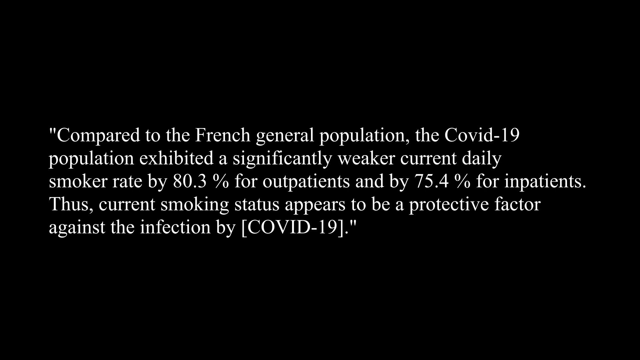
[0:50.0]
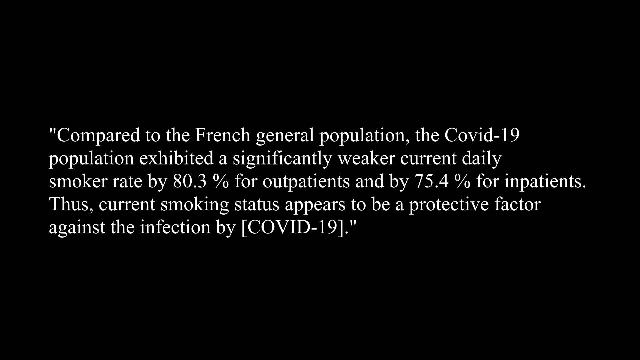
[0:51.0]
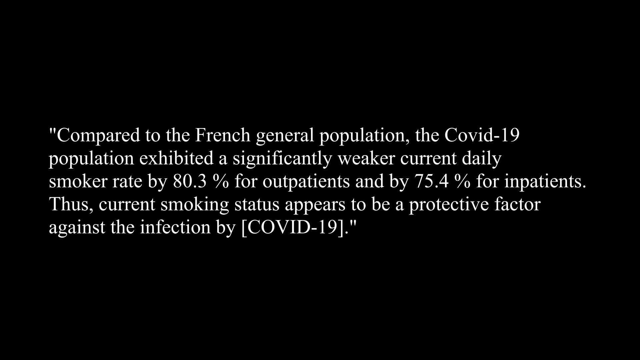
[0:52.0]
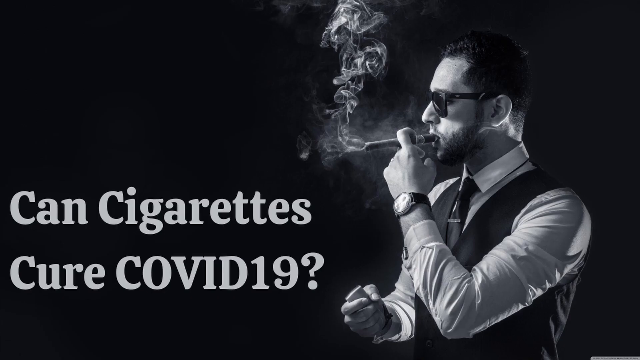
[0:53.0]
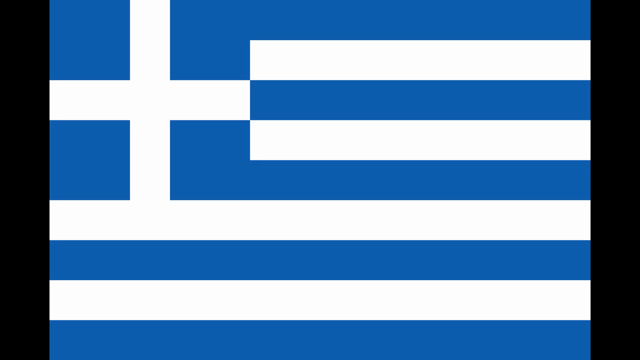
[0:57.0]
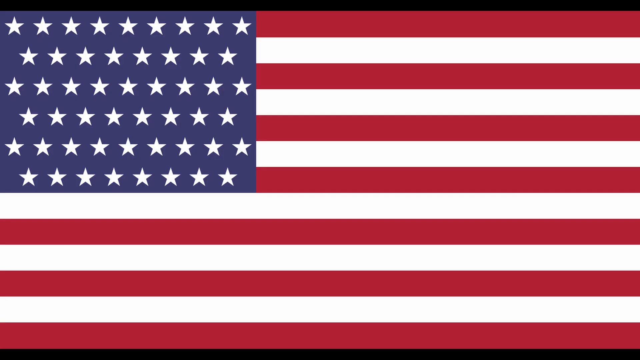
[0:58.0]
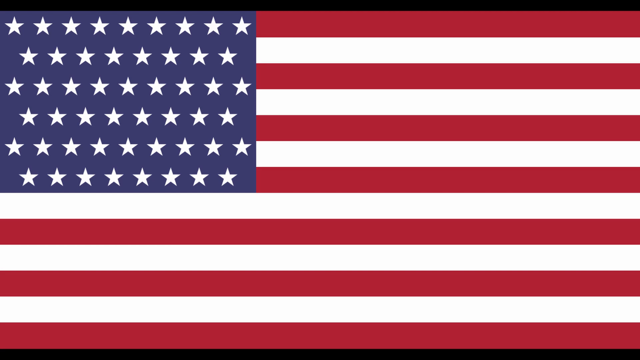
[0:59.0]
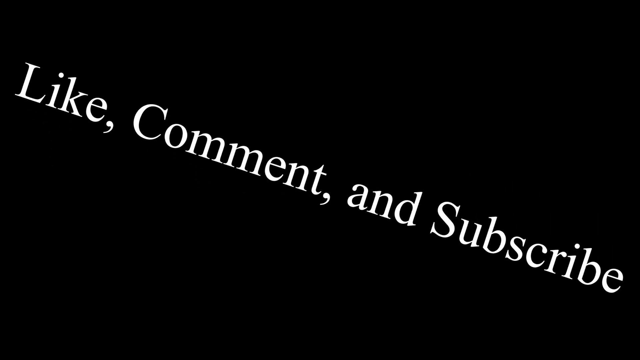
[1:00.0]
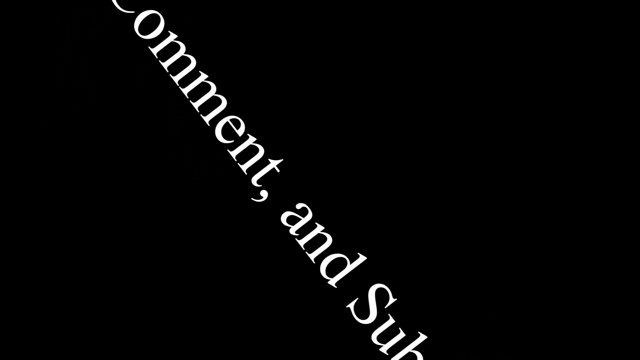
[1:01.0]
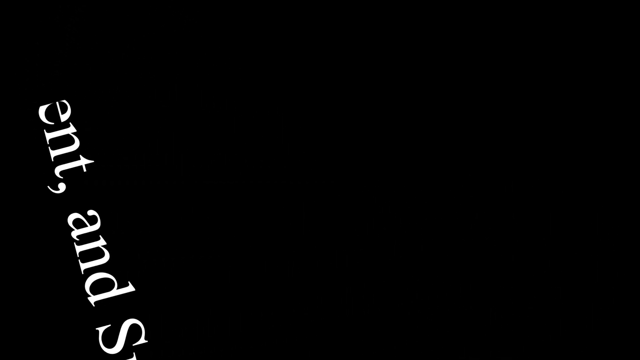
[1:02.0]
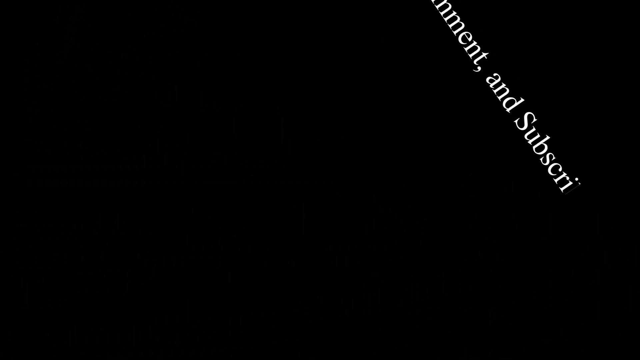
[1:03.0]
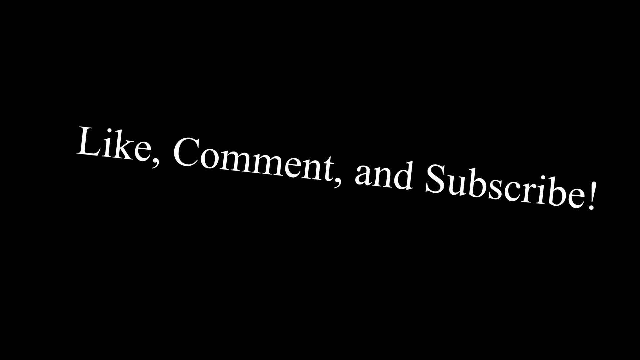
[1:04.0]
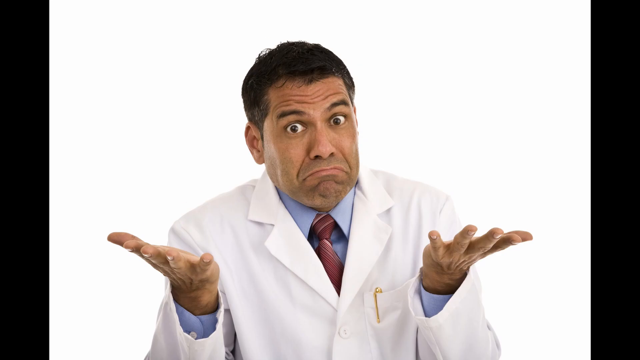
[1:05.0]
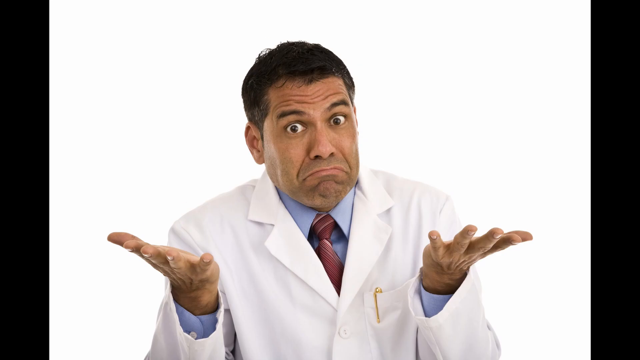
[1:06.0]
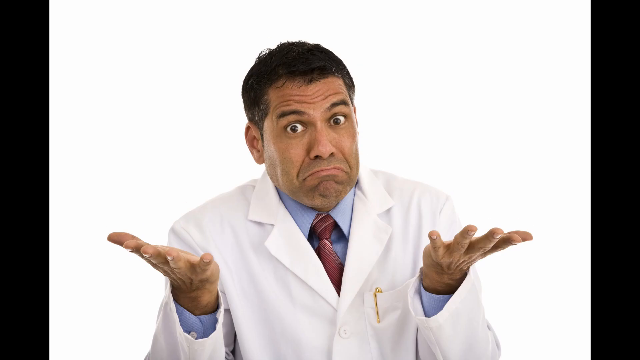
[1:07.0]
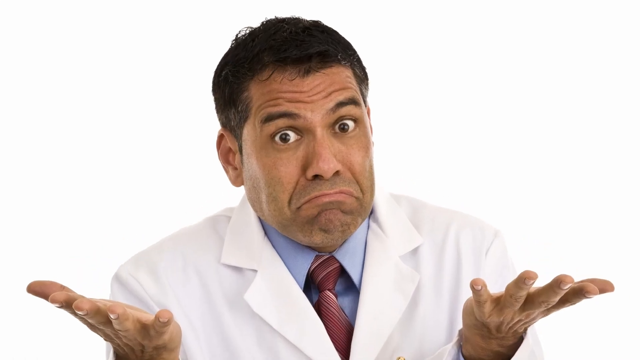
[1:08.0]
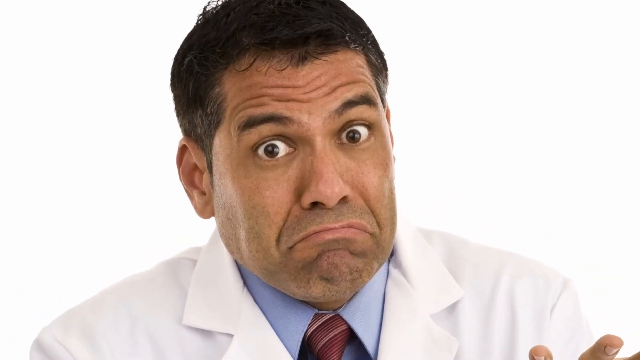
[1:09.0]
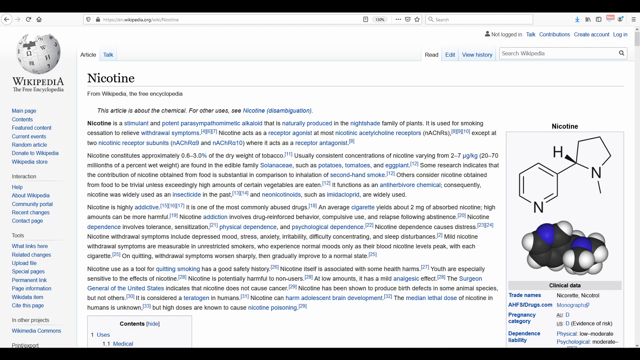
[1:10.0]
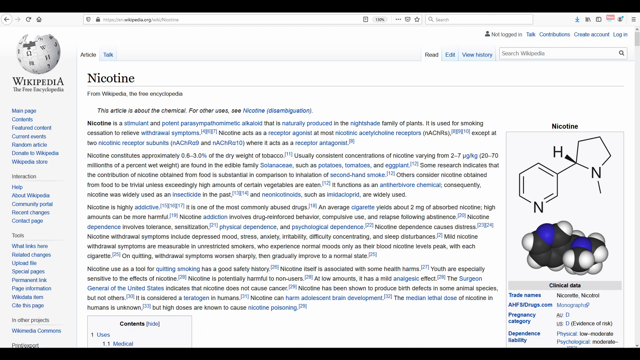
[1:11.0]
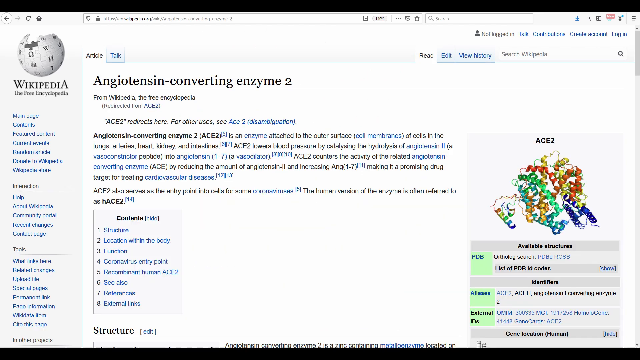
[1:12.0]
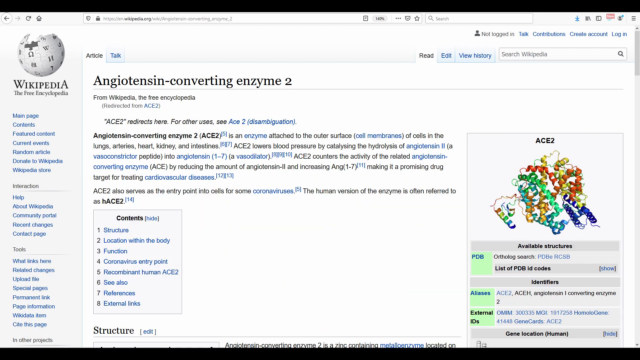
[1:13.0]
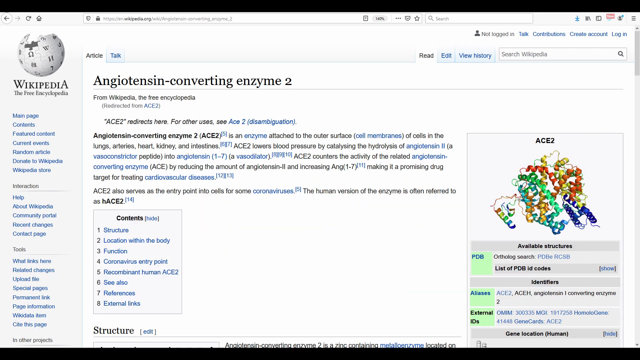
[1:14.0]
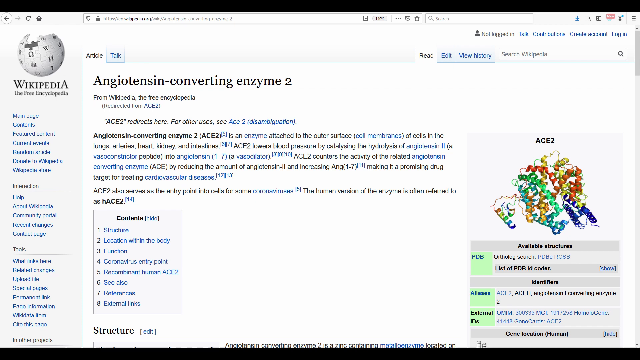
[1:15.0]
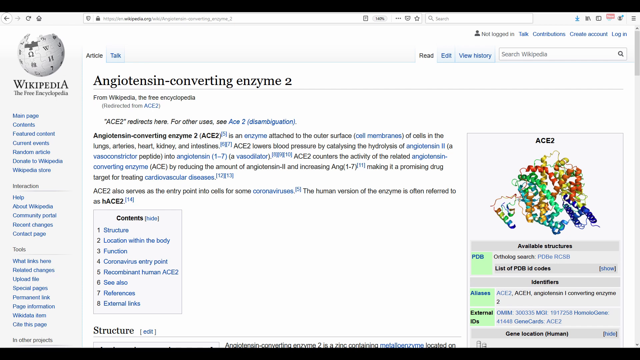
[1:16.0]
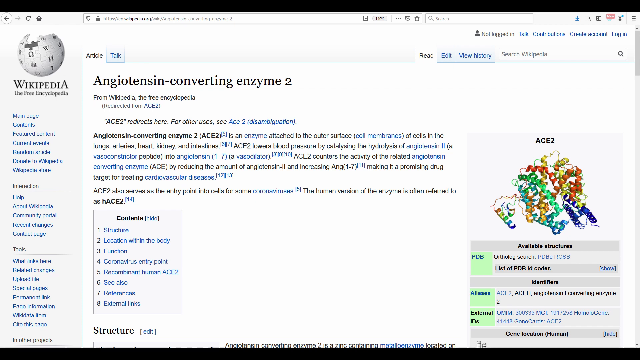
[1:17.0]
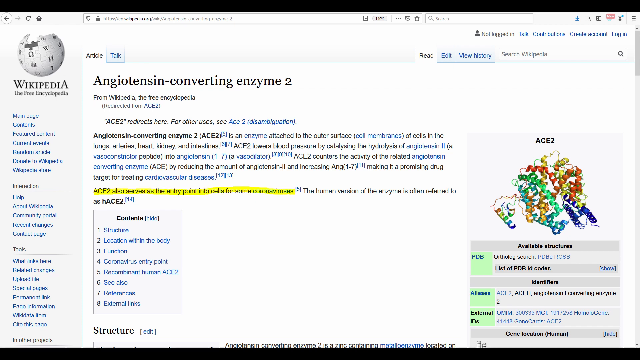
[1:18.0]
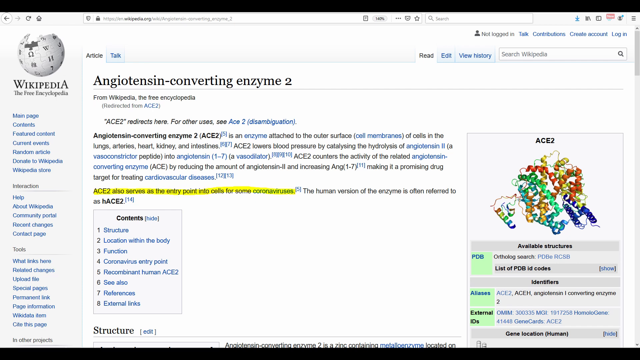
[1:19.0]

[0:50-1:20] A paragraph of white print on black reads: "Compared to the French general population, the COVID-19 population exhibited a significantly weaker current daily smoker rate by 80.3 percent for outpatients and by 75.4 percent for inpatients. Thus, current smoking status appears to be a protective factor against the infection by COVID-19." The image changes to a black-and-white photograph of the man in profile, on the right-hand side of the screen and facing left. He has dark hair, dark sunglasses and a beard, and he is smoking a cigar. He wears a wristwatch on his left hand, along with a vest, a light-colored shirt and a tie. The caption reads "Can Cigarettes Cure COVID-19?" Images of the Greek flag, the Chinese flag and the American flag follow. The words "Like," "Comment" and "Subscribe" then float around the scene in white on black. Next comes an image of a brown-skinned doctor with black hair, wearing a white lab coat, a blue shirt and a red tie. He raises both palms face up, and his expression says "I don't know." The image switches to the Wikipedia page about nicotine, which shows a long article with illustrations on the right-hand side. It then changes to the Wikipedia page for angiotensin-converting enzyme 2.